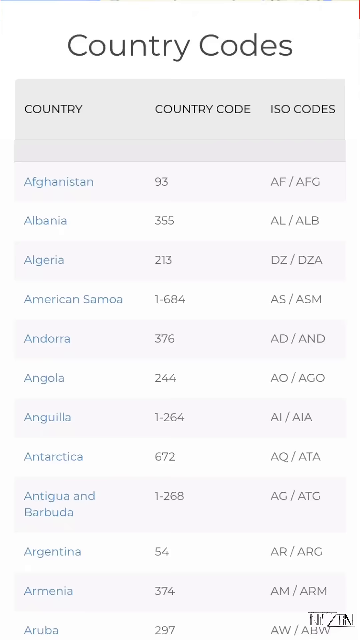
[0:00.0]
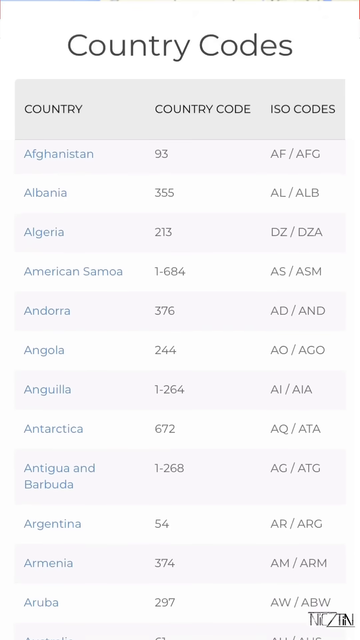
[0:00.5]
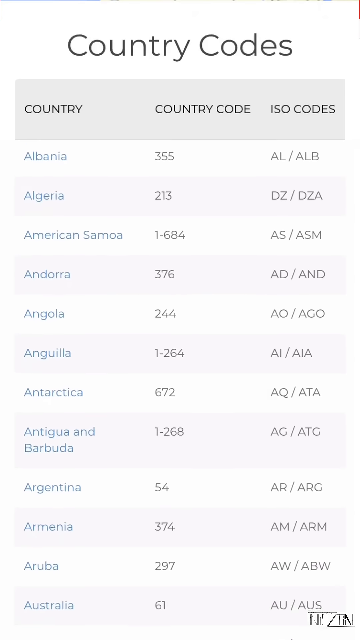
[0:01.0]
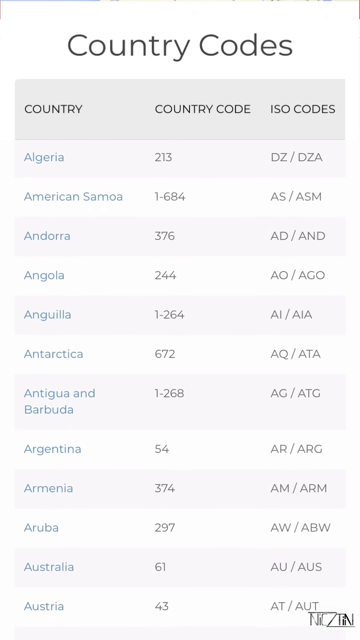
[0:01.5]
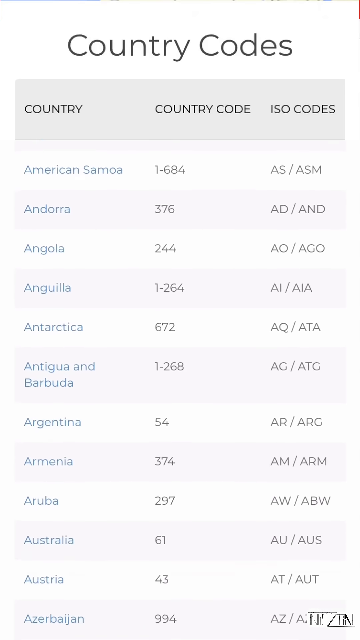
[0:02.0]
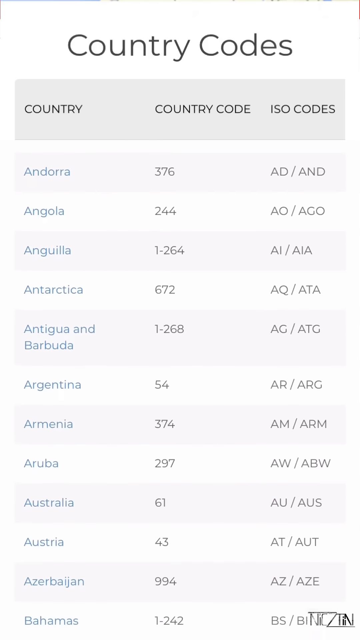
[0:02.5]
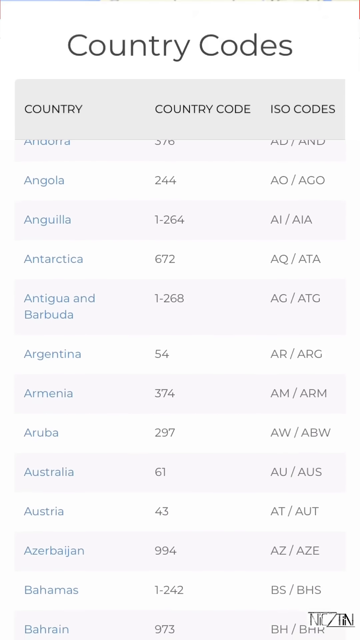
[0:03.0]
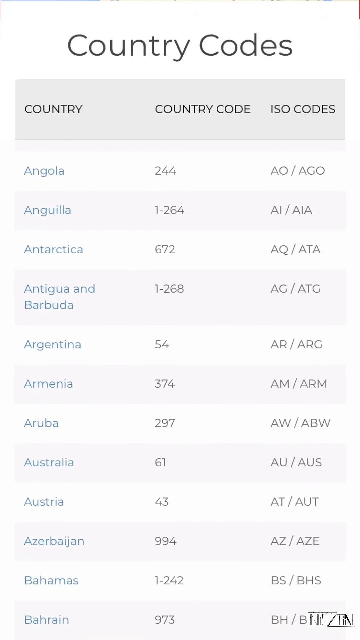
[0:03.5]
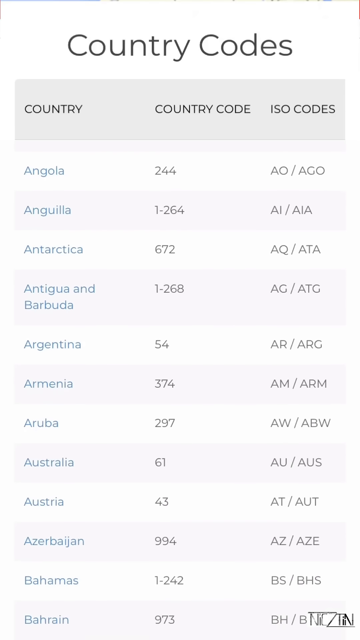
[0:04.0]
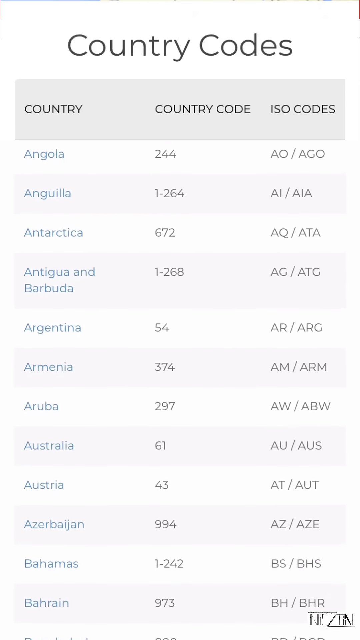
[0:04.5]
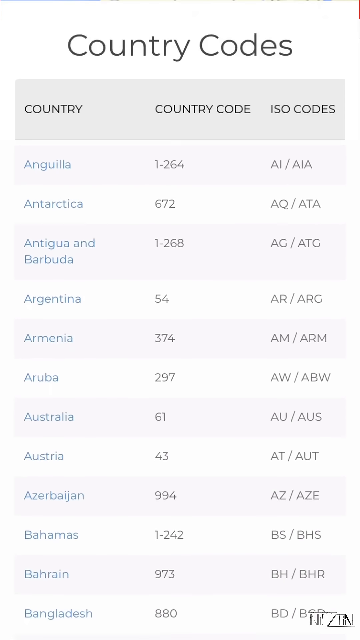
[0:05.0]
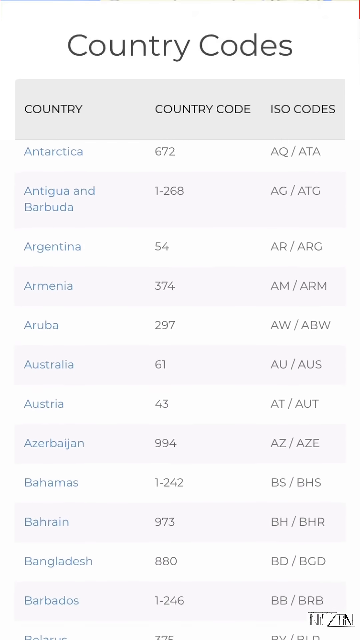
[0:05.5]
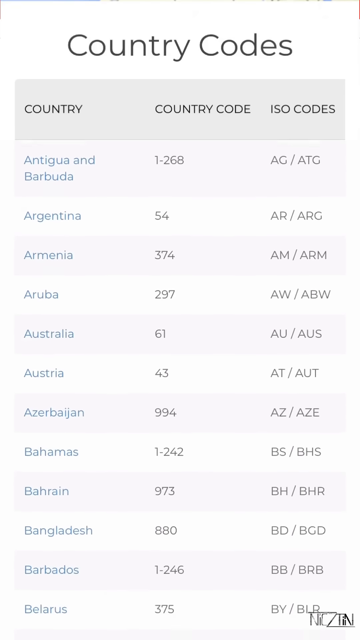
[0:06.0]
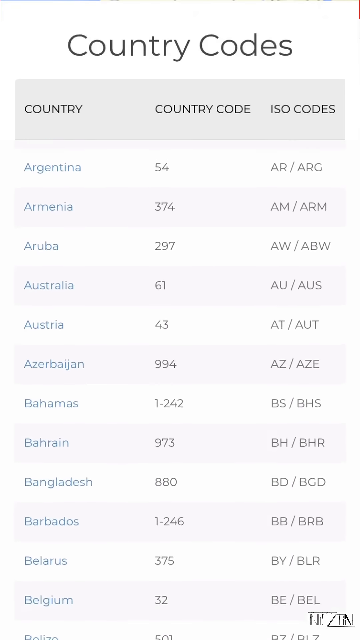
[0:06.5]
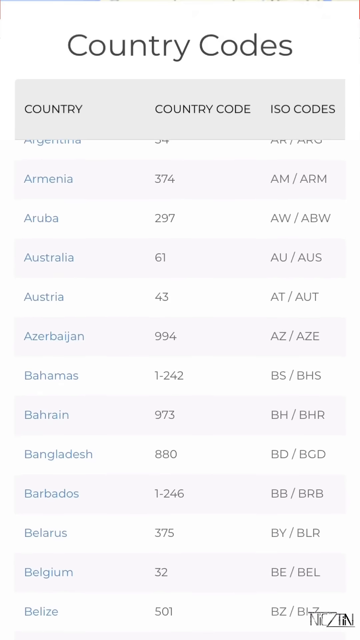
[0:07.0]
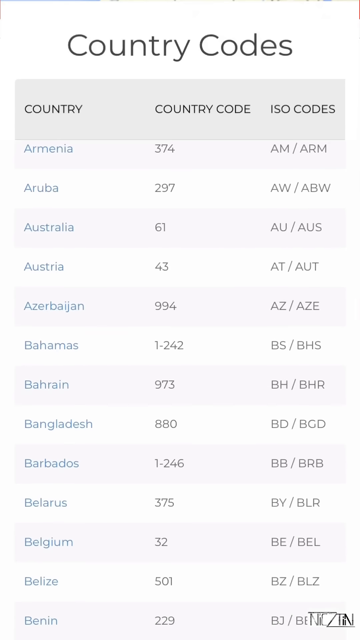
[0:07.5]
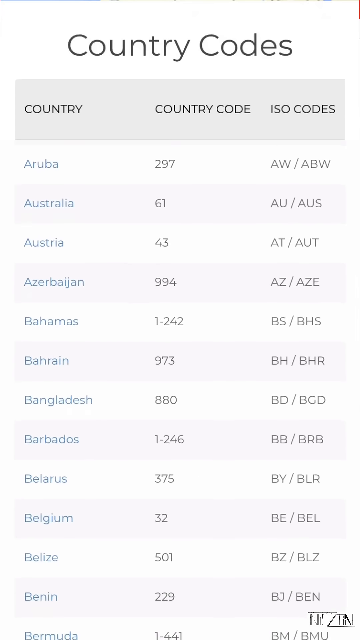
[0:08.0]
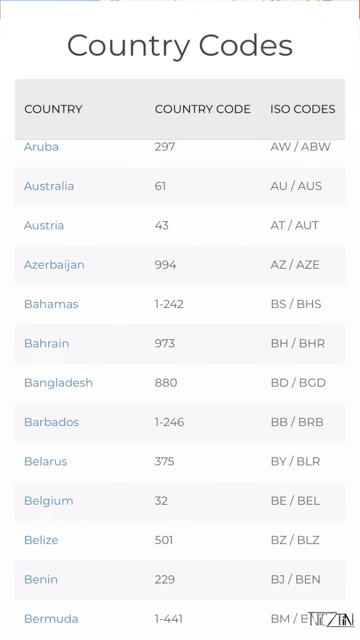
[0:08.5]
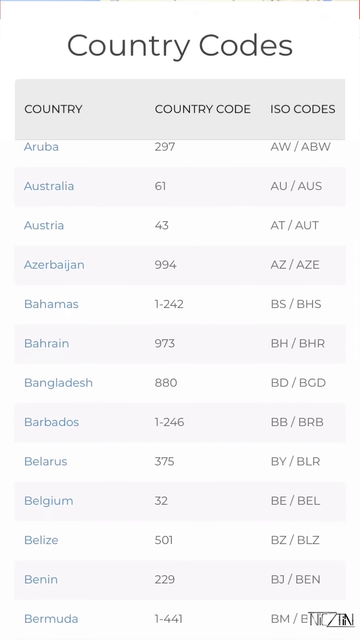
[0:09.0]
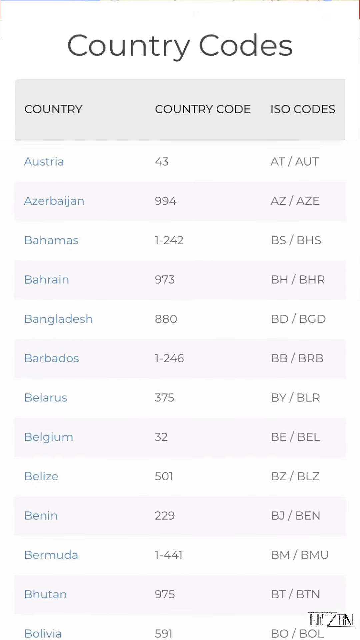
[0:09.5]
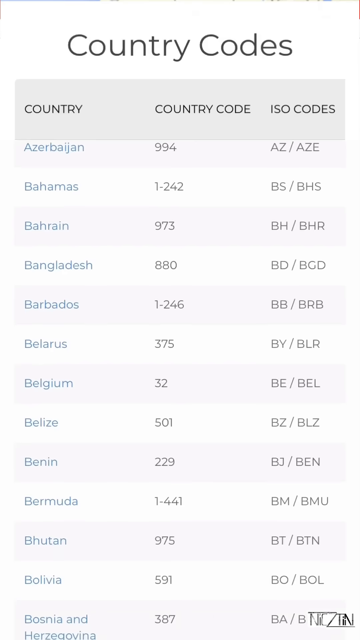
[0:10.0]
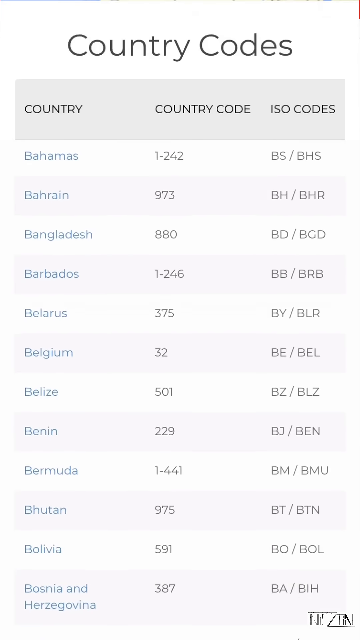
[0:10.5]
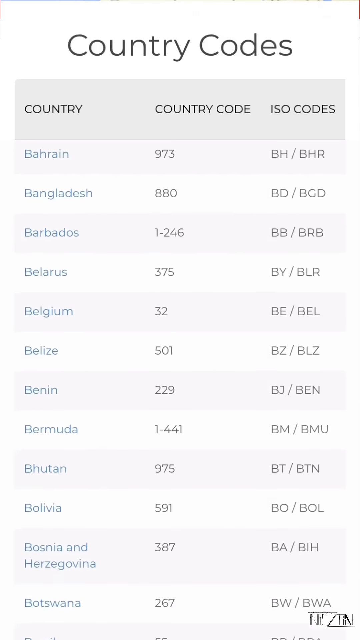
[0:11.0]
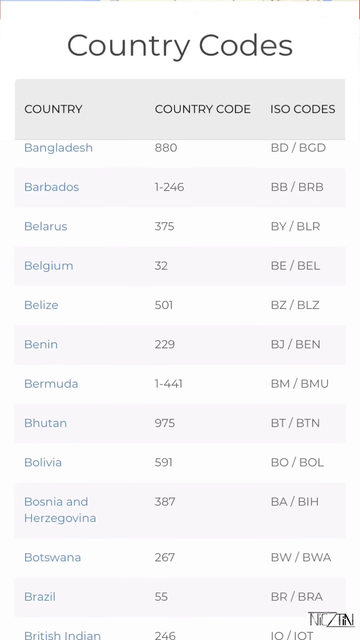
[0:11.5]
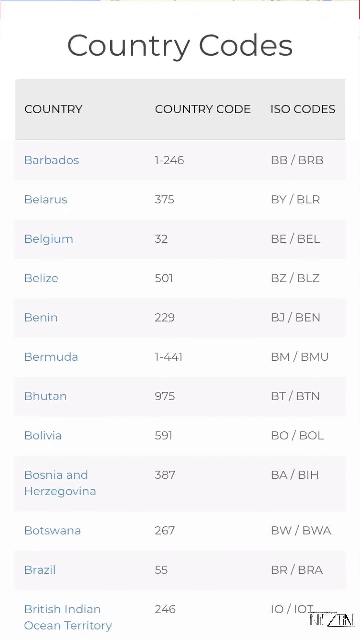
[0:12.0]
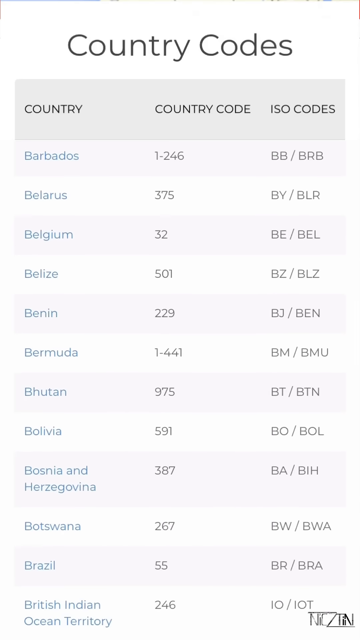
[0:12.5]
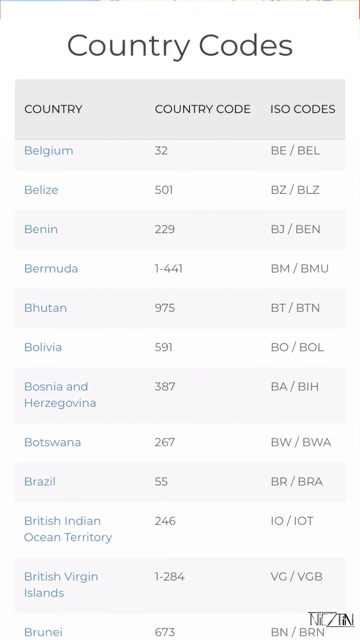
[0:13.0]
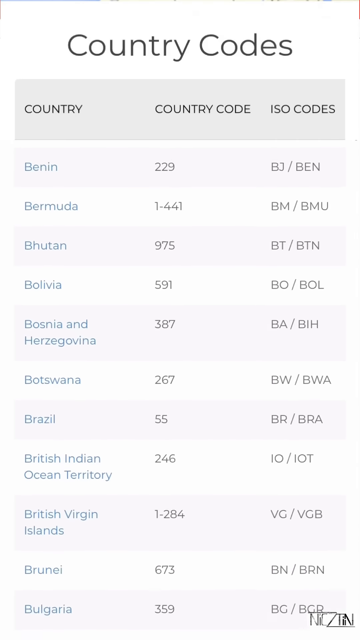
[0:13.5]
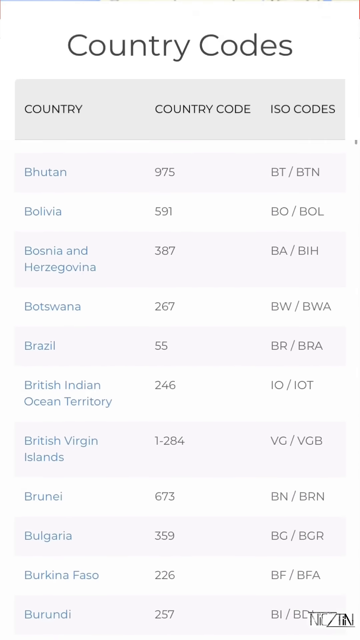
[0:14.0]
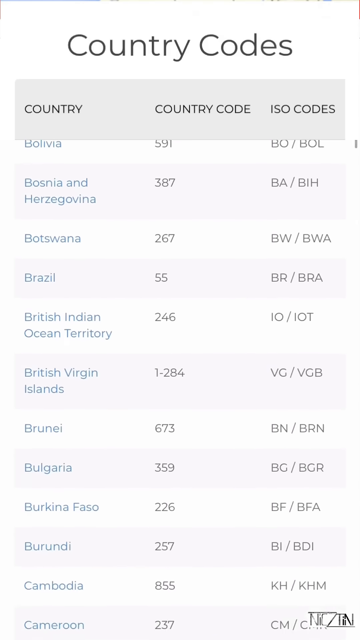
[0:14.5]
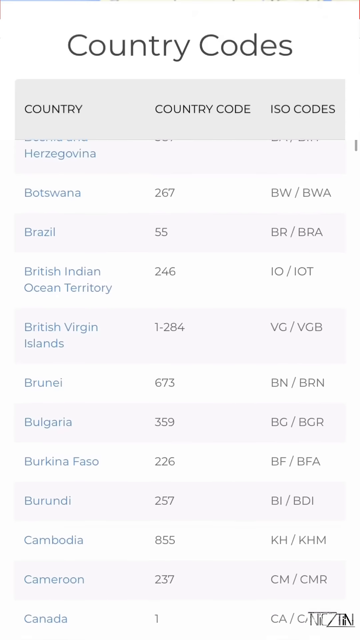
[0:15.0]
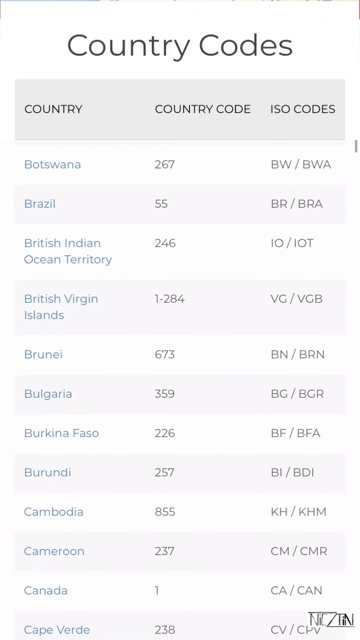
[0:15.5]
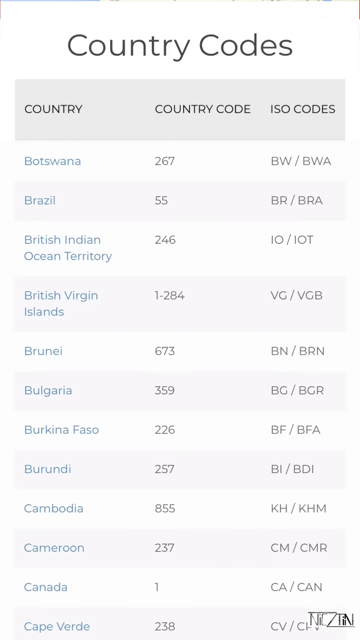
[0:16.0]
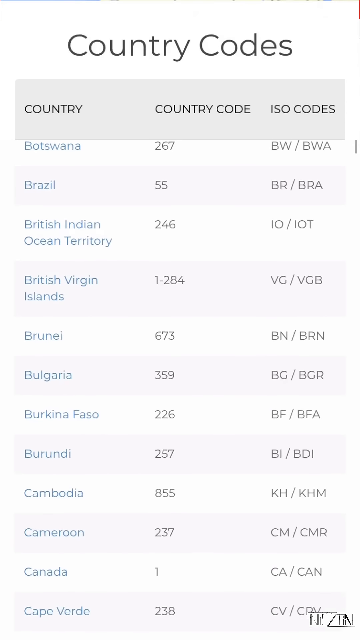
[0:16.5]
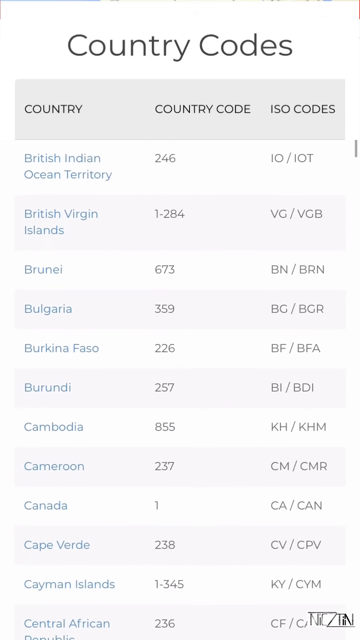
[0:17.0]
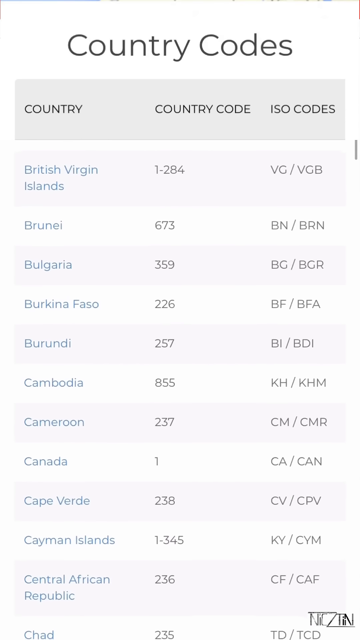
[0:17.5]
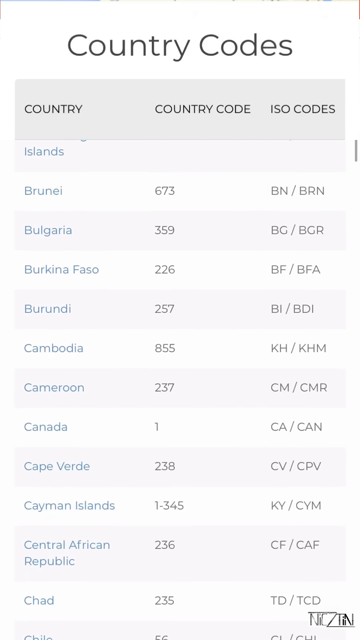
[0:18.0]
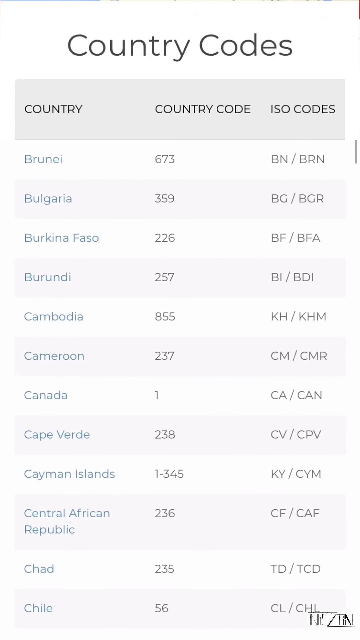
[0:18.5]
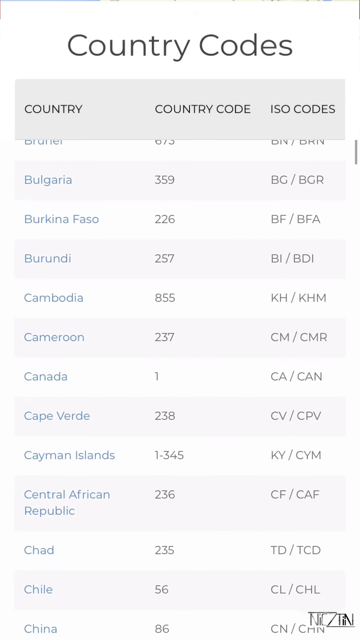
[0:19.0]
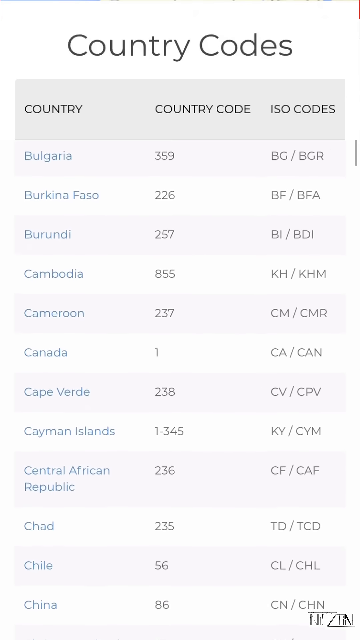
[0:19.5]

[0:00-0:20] A screen displays the title "country codes," with column headings "country," "country code," and "ISO code" beneath it. Below is a list of countries that appears to be alphabetical, each with its code: Afghanistan is 93, Albania is 355, and American Samoa is 1-684. The list goes through the countries alphabetically, showing their codes; it scrolls, stops, then scrolls some more and stops.